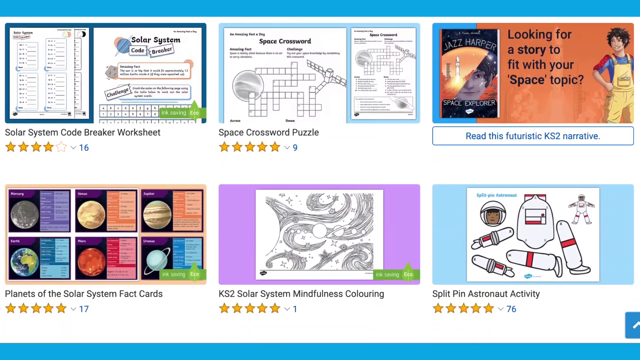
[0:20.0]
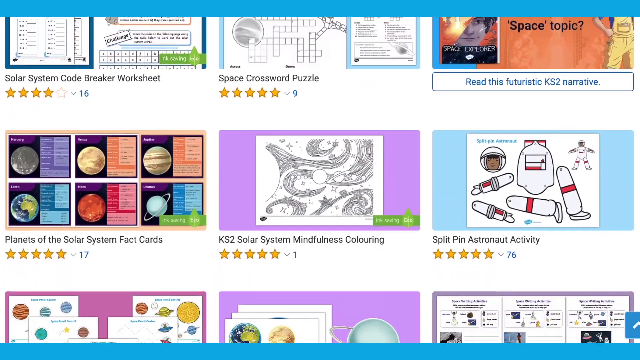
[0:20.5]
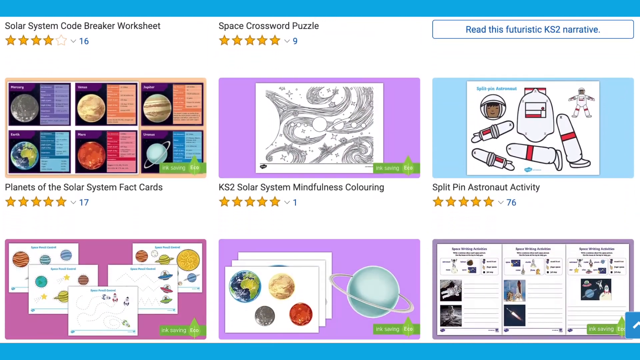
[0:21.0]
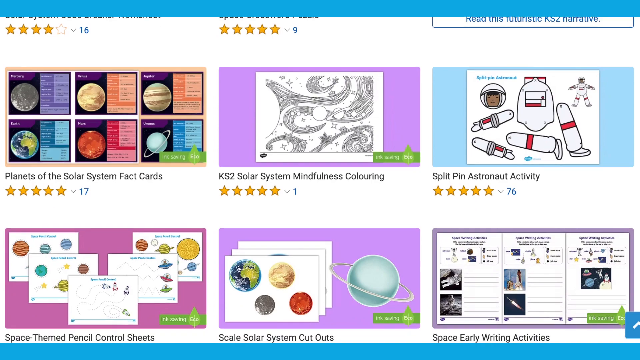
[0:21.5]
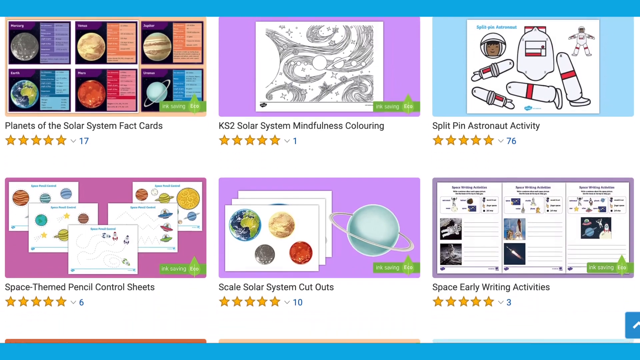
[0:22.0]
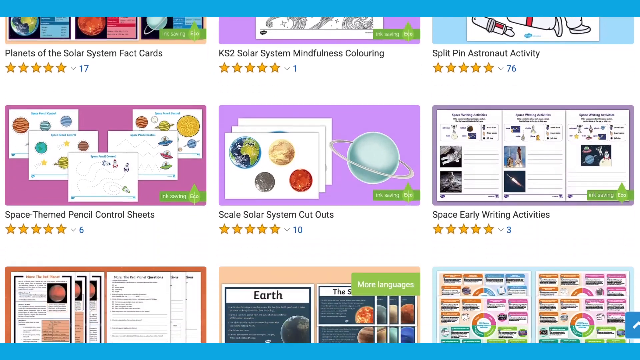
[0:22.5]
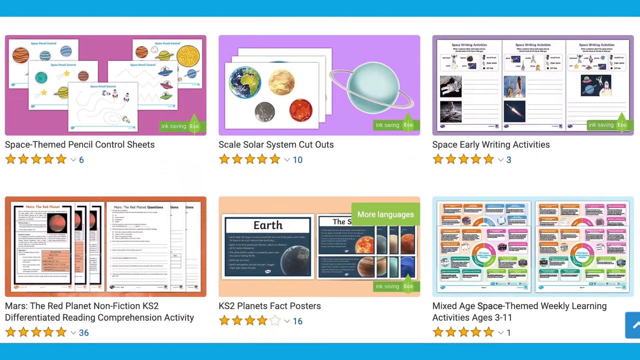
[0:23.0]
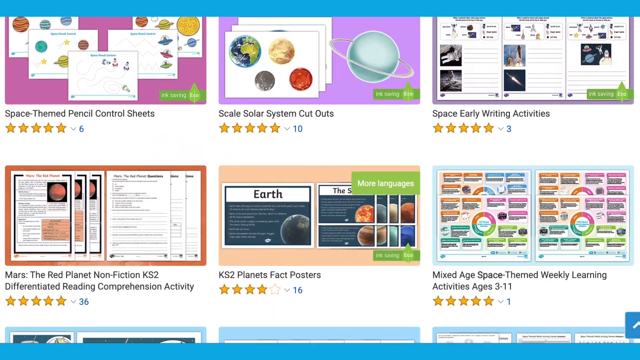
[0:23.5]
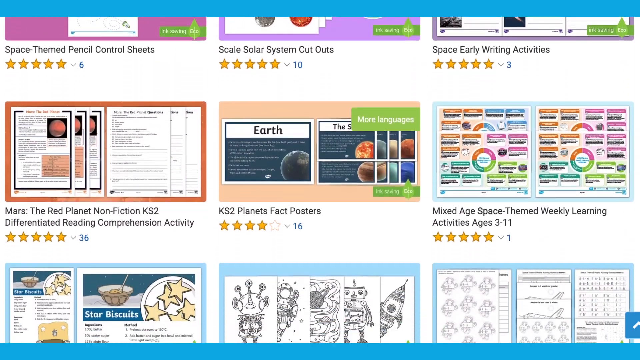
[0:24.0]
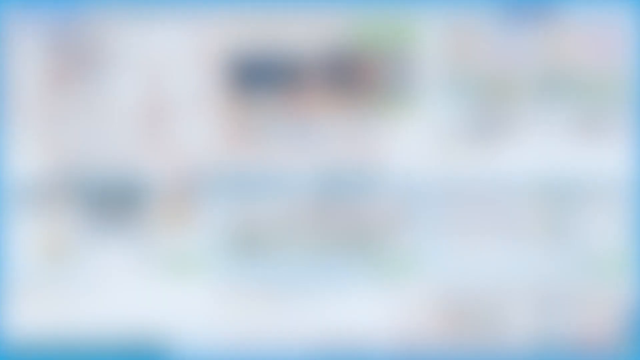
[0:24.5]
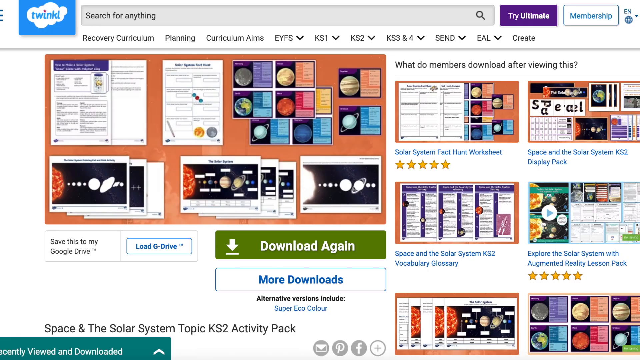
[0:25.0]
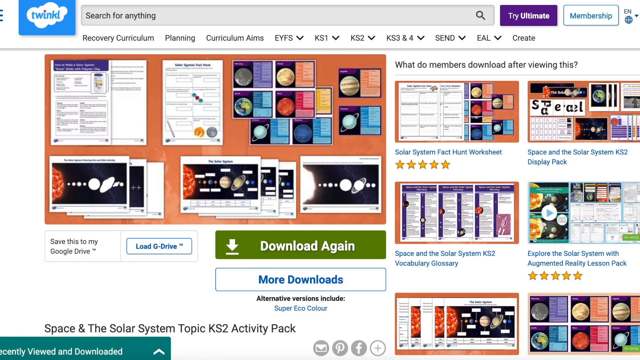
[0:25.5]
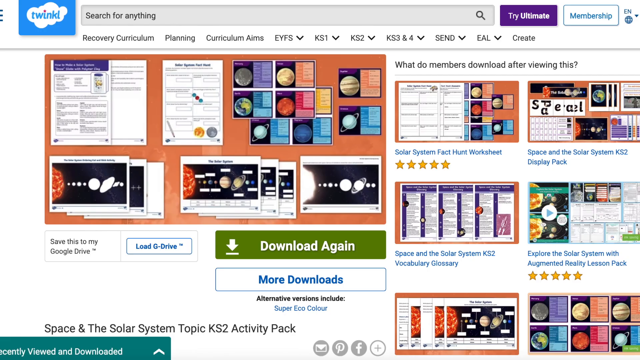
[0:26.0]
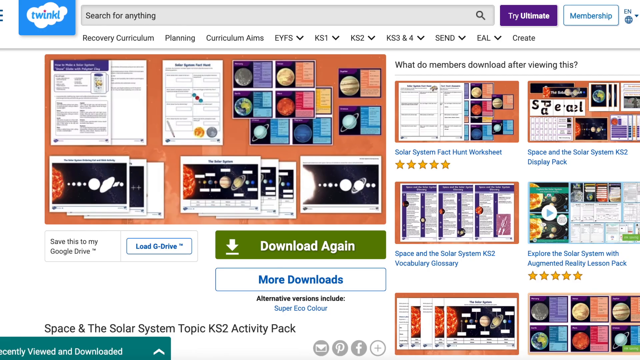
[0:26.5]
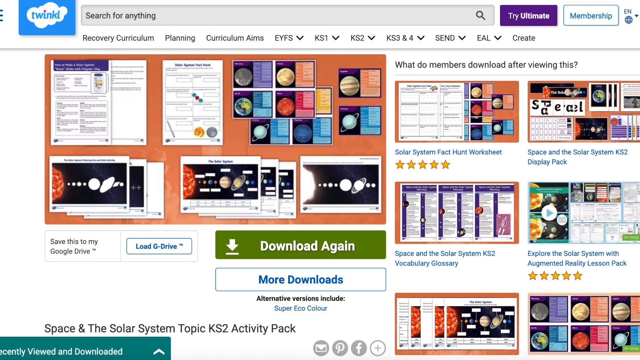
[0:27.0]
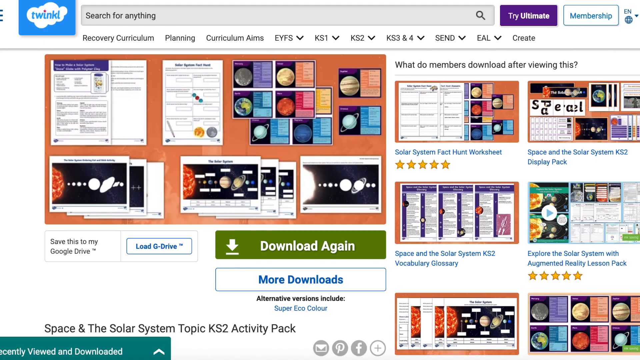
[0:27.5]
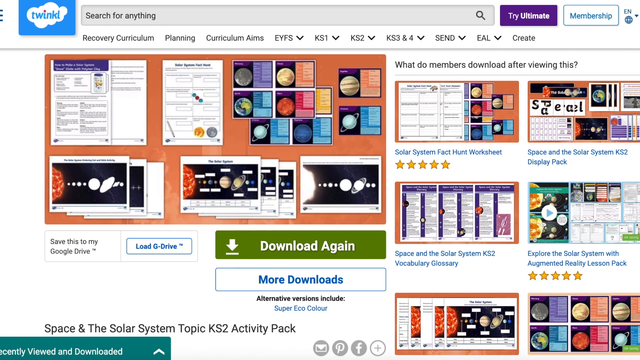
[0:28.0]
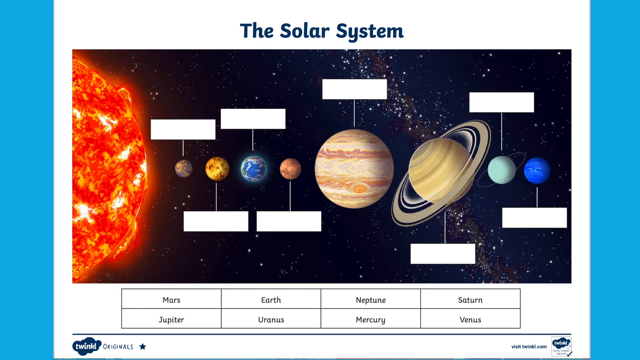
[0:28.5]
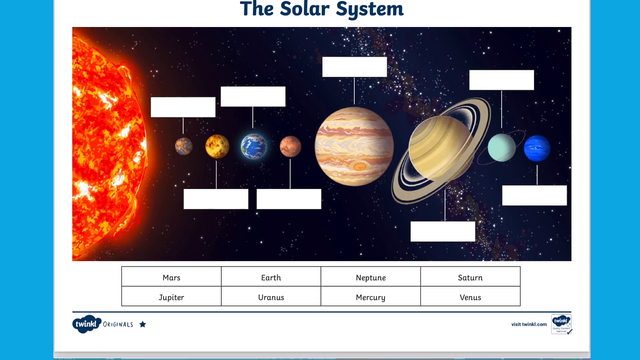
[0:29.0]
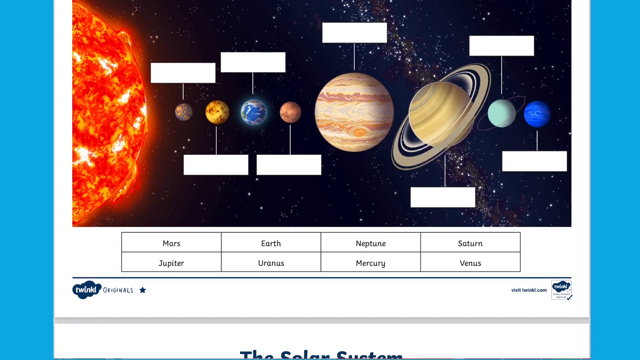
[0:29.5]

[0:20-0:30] A website offers downloadable educational titles, seemingly for everyone from adults to children. Tiles include "Space Crossword Puzzle" and "Solar System Codebreaker Worksheet", each with a star rating next to it. The Solar System Codebreaker Worksheet has four out of five stars and 16 reviews, while the Space Crossword Puzzle has five out of five stars with nine reviews. The page scrolls, showing several of the titles, and then the site hosting them shows that they can be downloaded.